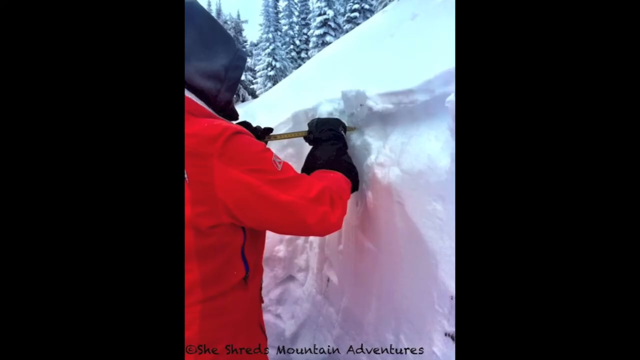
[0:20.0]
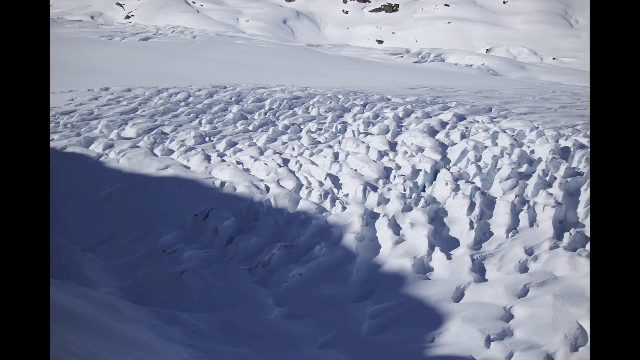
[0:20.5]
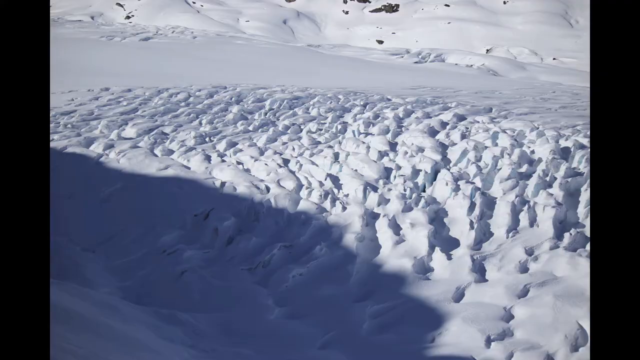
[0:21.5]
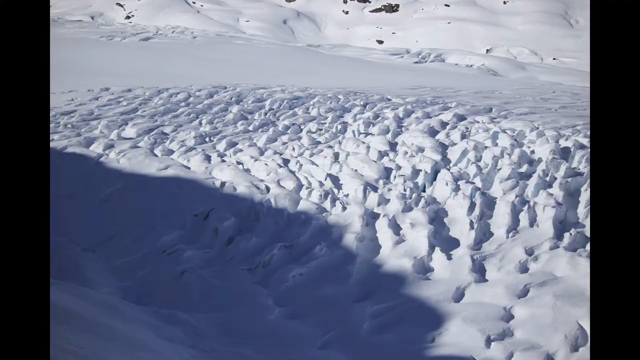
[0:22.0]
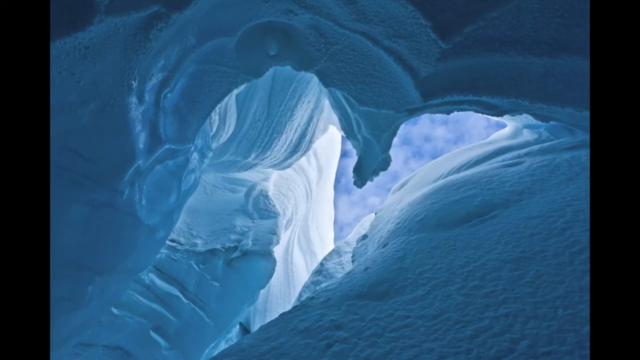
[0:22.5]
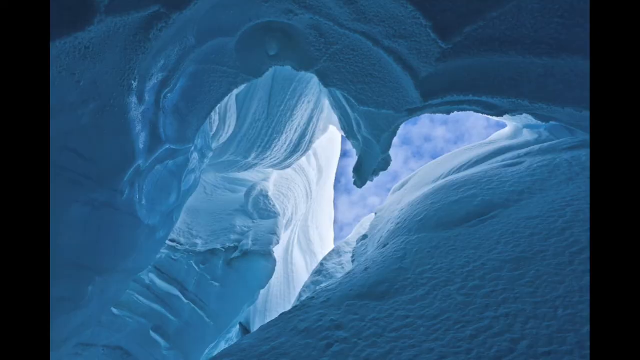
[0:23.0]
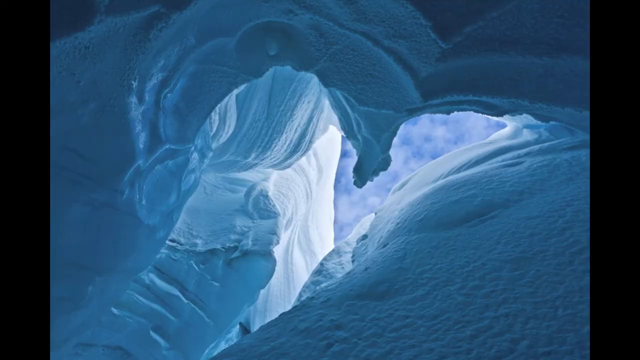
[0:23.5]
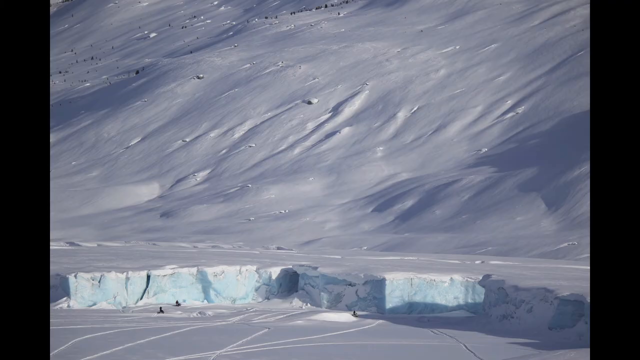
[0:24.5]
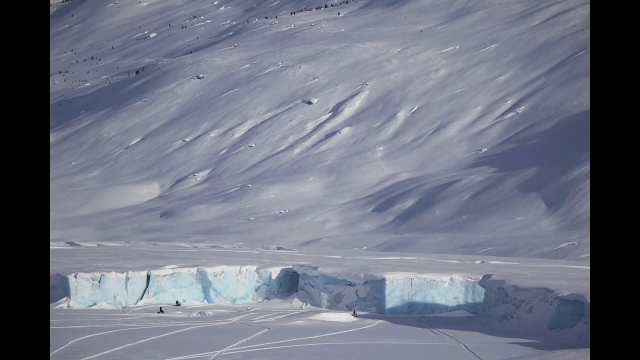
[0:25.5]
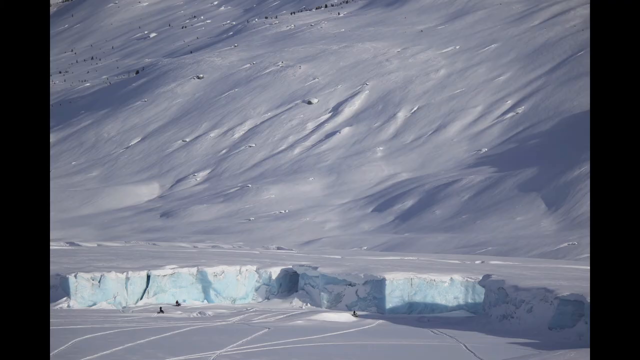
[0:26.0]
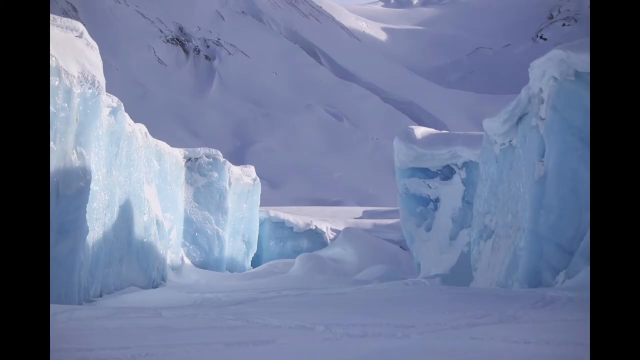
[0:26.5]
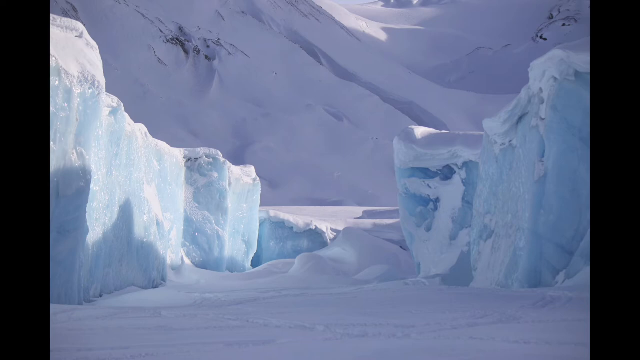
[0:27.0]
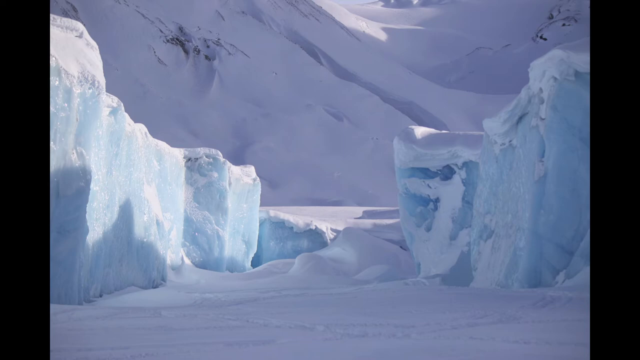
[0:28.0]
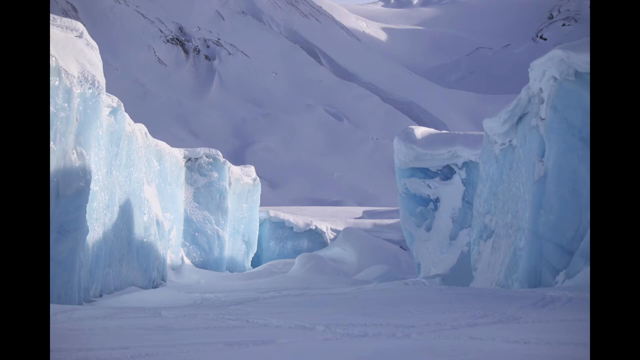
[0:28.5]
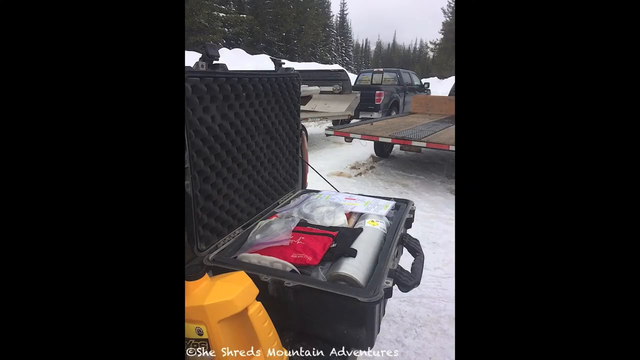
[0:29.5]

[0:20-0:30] A person seems to be carving something into the snow. The video cuts to a landscape with snow on it, then to a picture of what looks like a crevice covered in snow, and a hill covered in snow. Next come what look like blocks of ice covered in snow. Then an open black box appears with a lot of plastic bags inside, and there seems to be a yellow container in the foreground. Two trucks are in the background: one has a bed in the back that is kind of made of wood, and the other truck seems to be black. Many pine trees are in the far background.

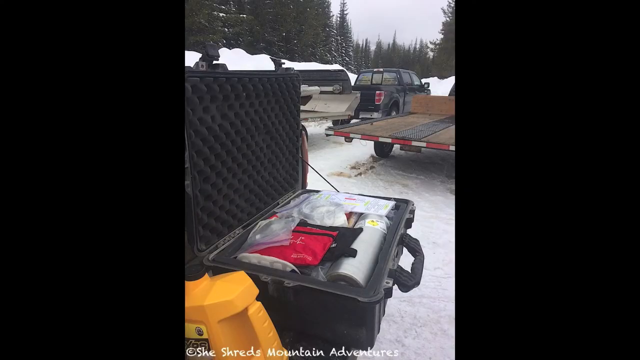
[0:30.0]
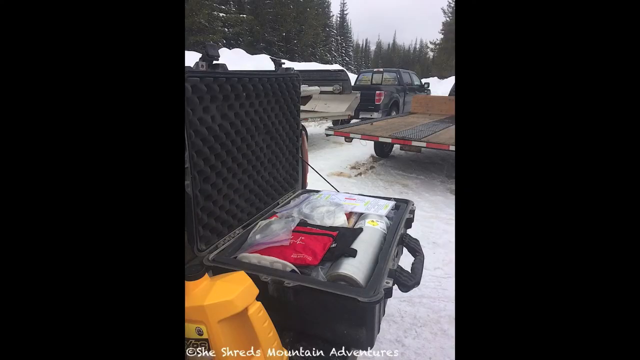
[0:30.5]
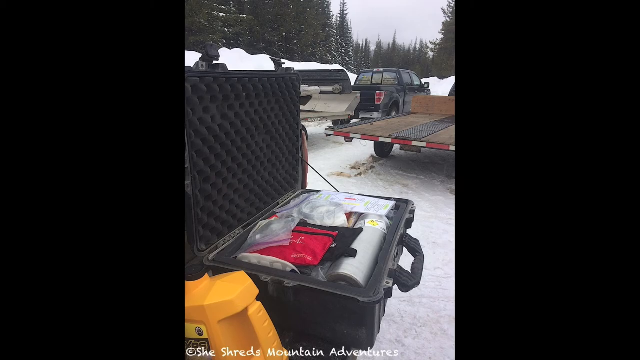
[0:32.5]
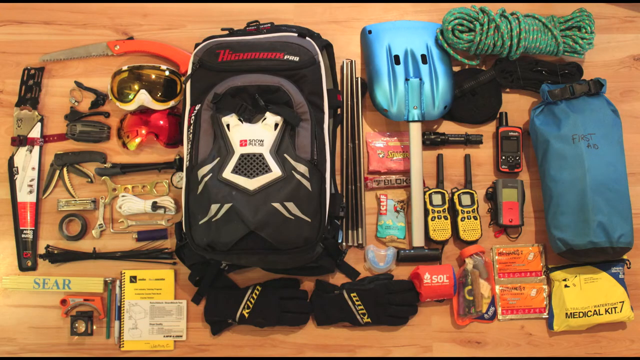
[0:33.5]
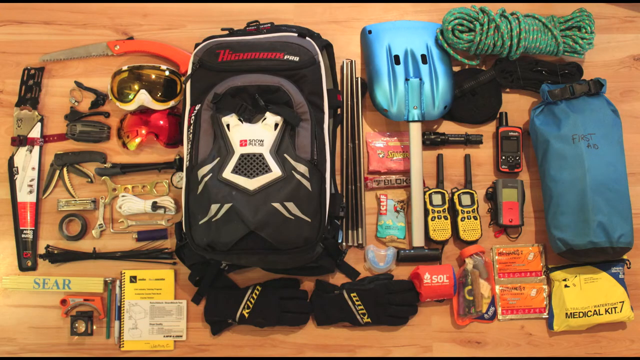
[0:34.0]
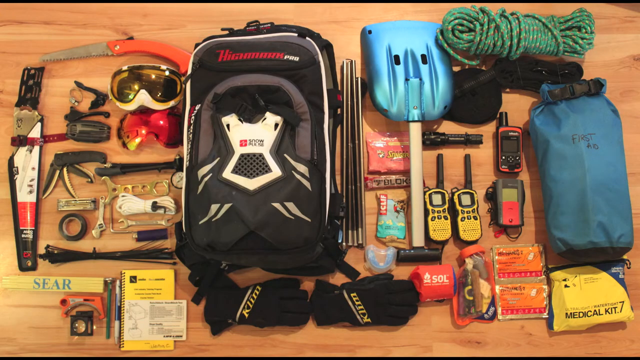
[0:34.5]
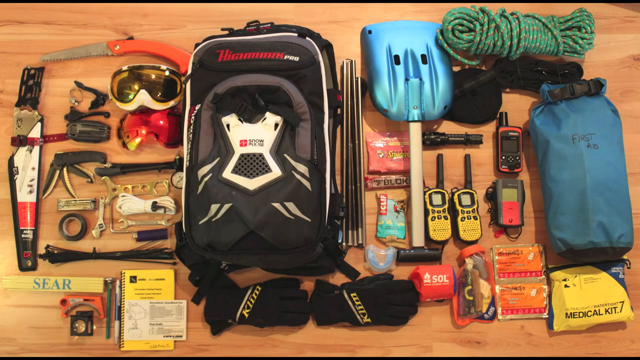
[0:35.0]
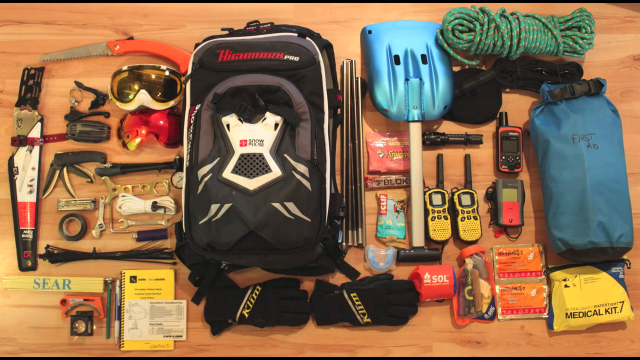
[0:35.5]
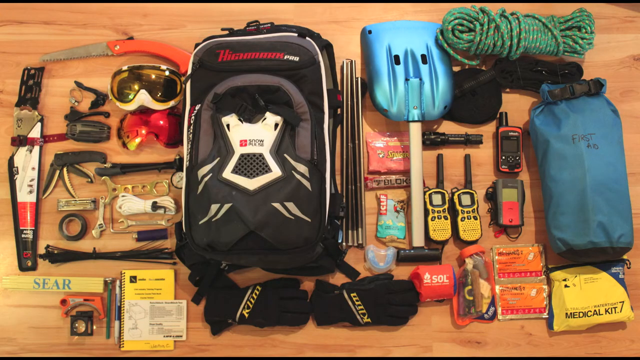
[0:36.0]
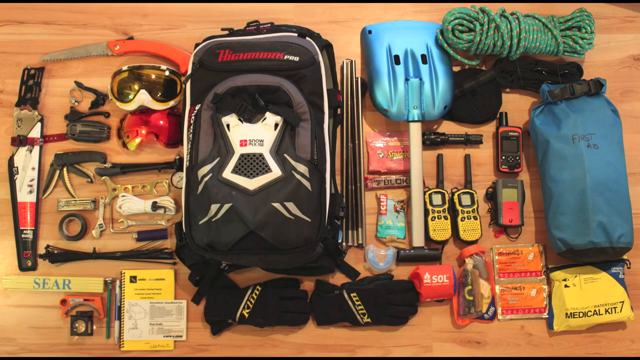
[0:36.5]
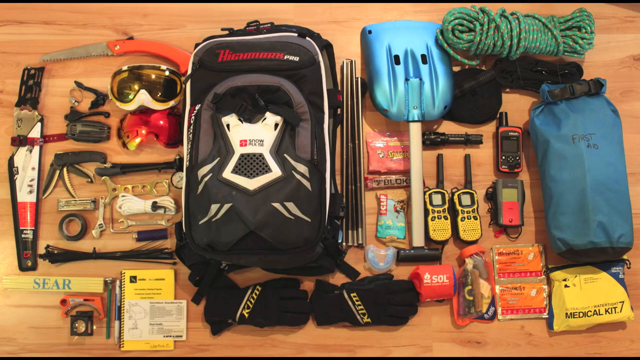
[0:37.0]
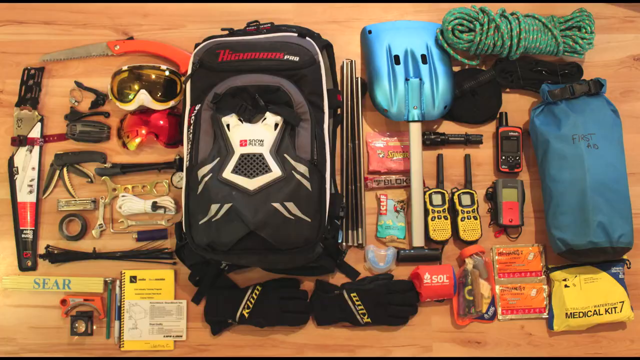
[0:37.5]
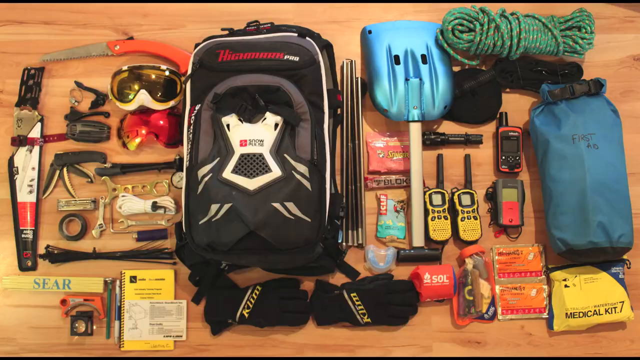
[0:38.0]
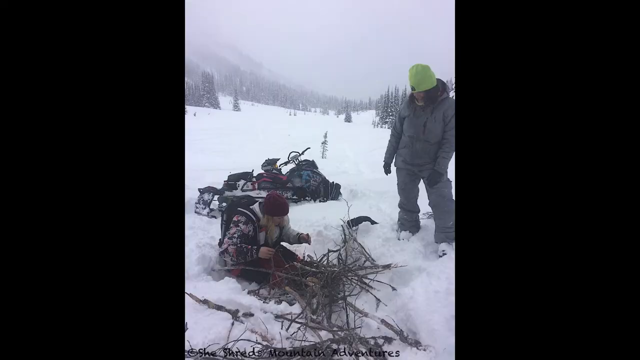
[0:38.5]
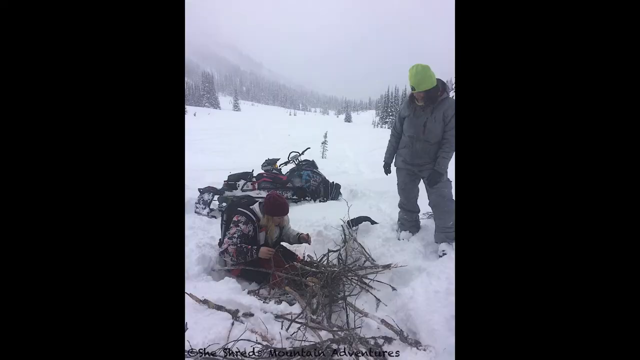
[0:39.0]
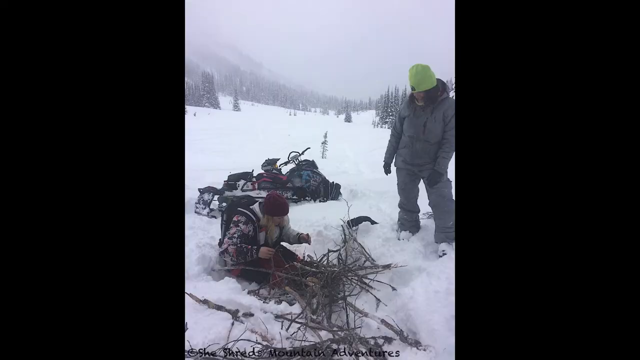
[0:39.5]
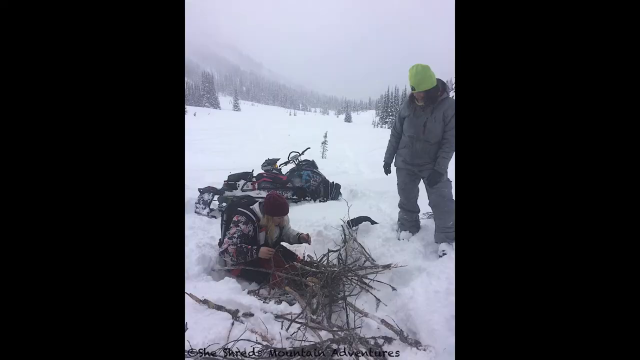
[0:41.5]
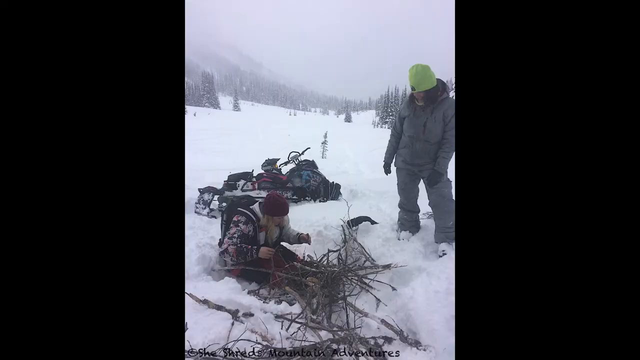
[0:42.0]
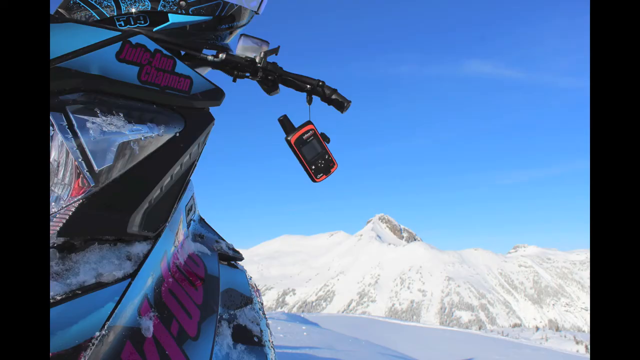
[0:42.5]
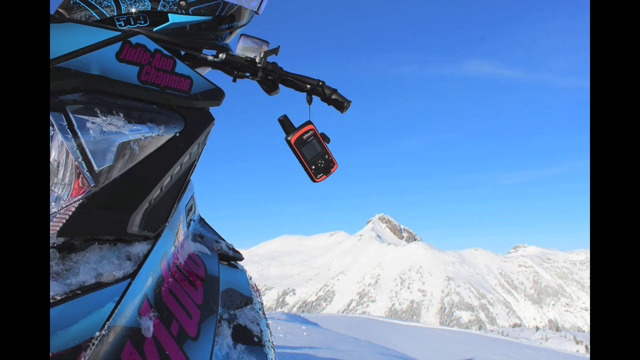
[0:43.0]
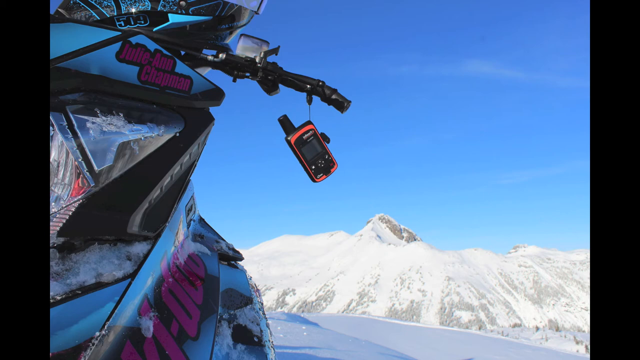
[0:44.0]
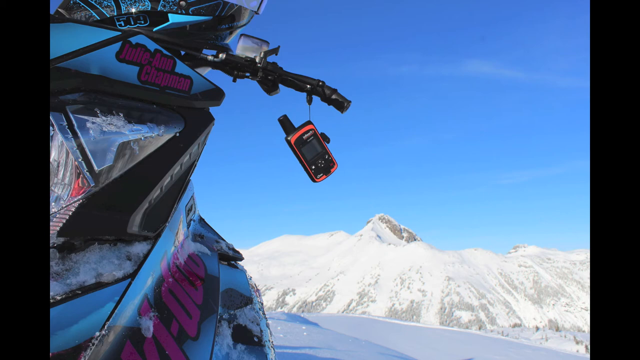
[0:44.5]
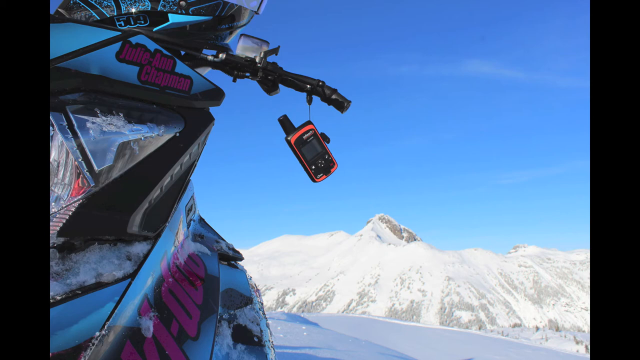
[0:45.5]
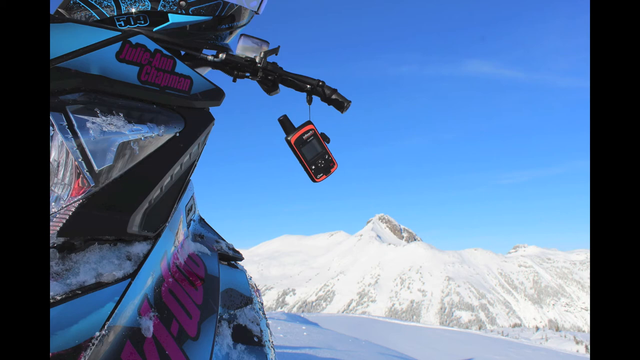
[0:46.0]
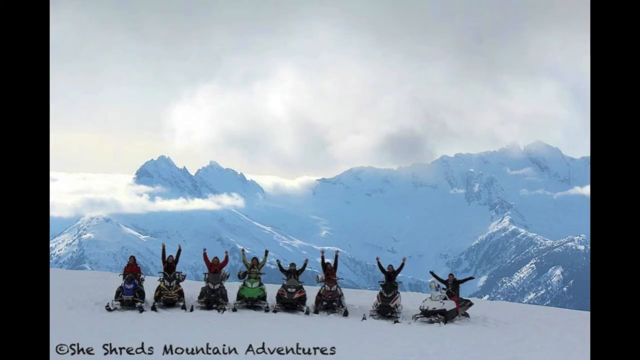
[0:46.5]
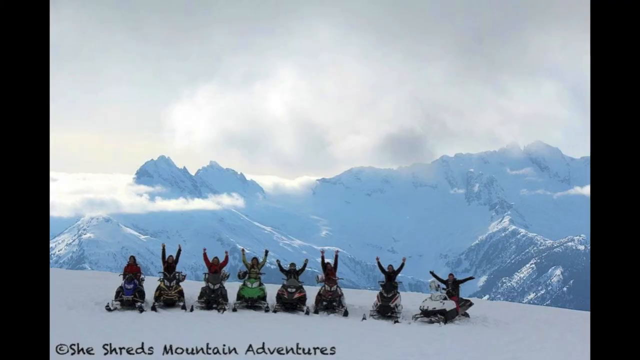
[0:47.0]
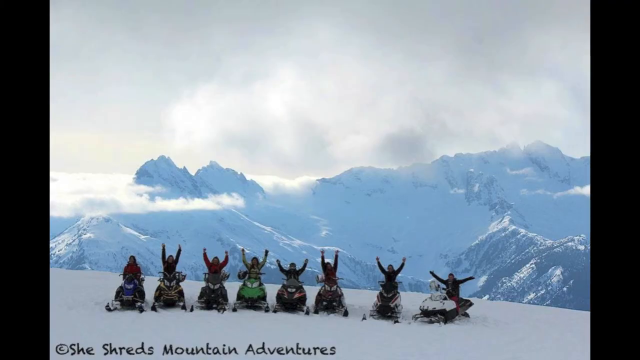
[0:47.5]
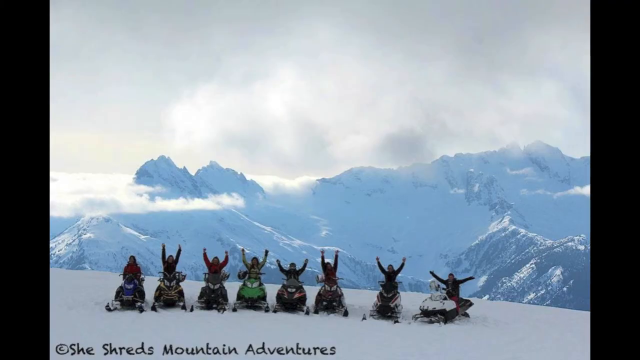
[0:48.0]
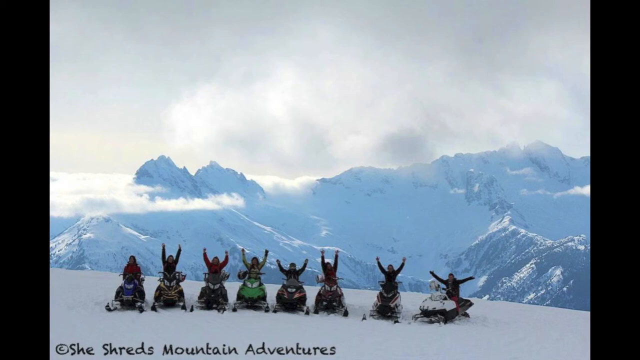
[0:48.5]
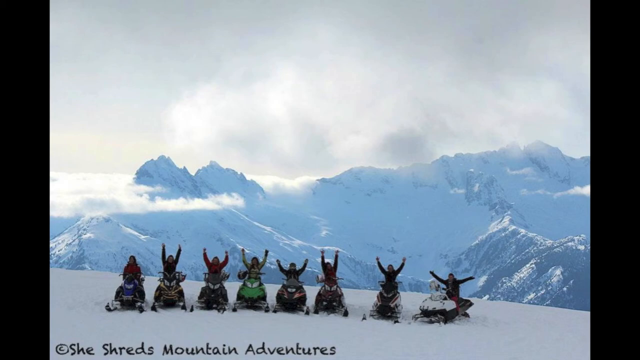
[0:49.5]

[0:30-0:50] What kind of looks like a black box or a black suitcase holds a bunch of plastic bags, along with what looks like a red bag and a gray canteen. A yellow container is in the foreground, and two trucks are in the background, the bed of one seemingly made of wood. The video cuts to a wooden counter with a lot of supplies on top that seem to be for use in the snow: goggles, backpacks, a shovel, walkie-talkies, a green rope and apparently black gloves. Next, two people are in the snow; one seems to be waist deep in it while the other is still standing high up. Another picture shows a snow-covered mountain range in the background, and in the foreground there seems to be what could be some kind of tent with a black rod attached, with a walkie-talkie hanging from it. The video then cuts to a picture of a group of people on snowmobiles, apparently about eight of them, with their hands up and a huge snow-covered mountain range in the background.